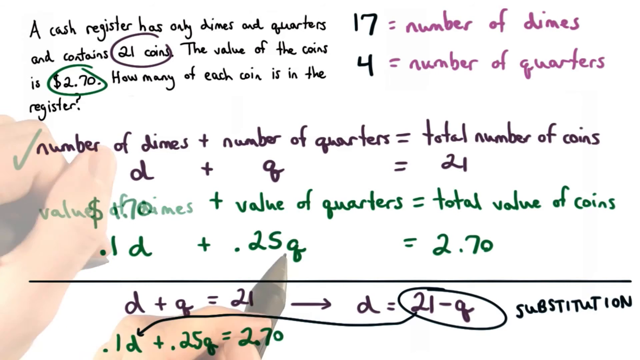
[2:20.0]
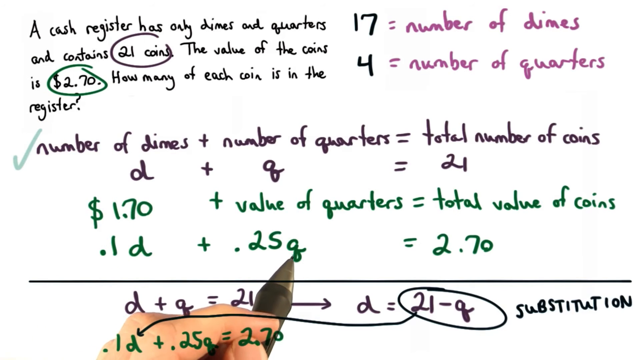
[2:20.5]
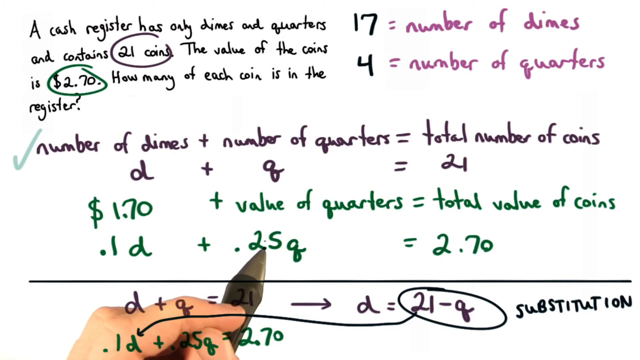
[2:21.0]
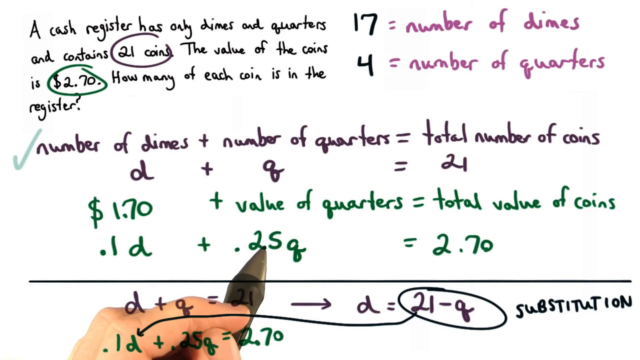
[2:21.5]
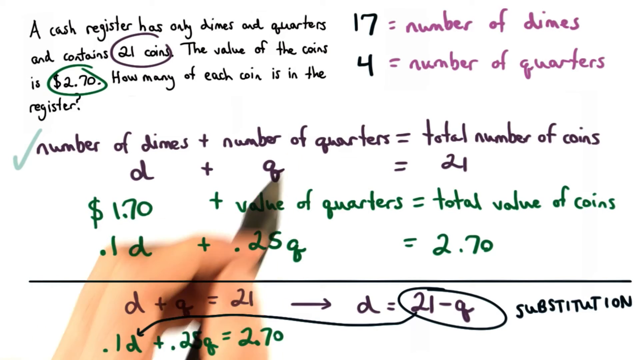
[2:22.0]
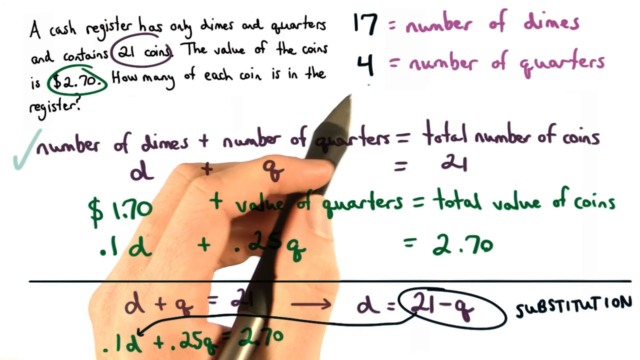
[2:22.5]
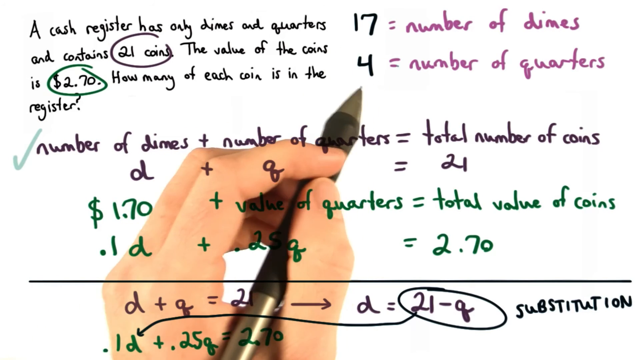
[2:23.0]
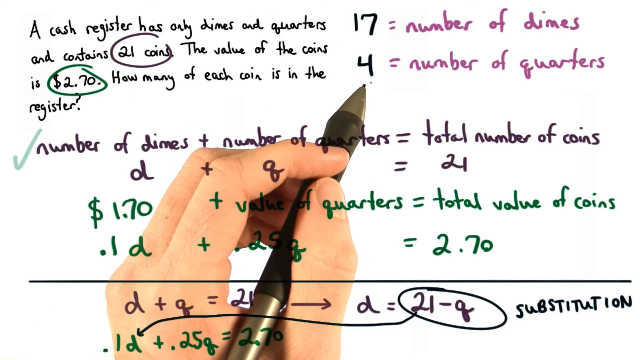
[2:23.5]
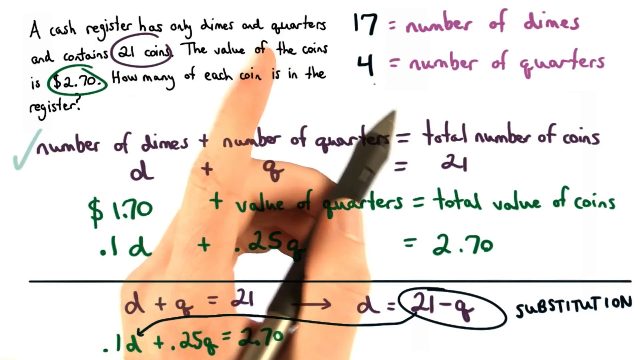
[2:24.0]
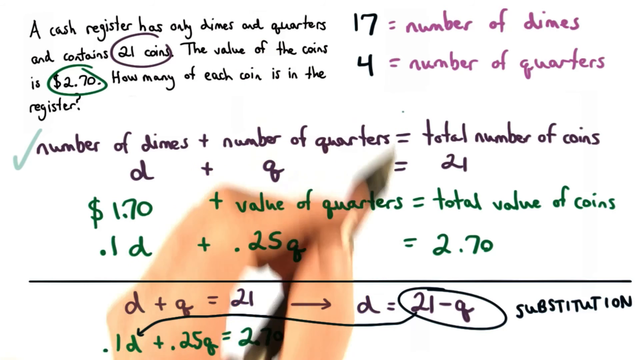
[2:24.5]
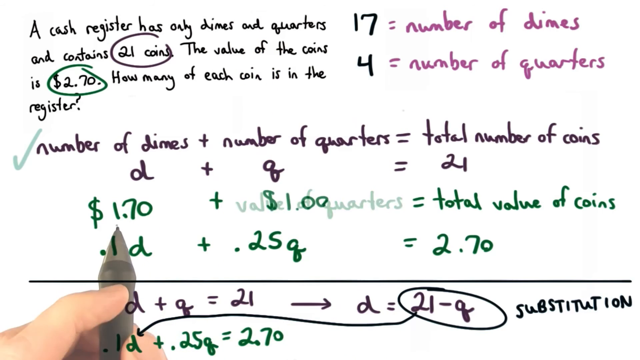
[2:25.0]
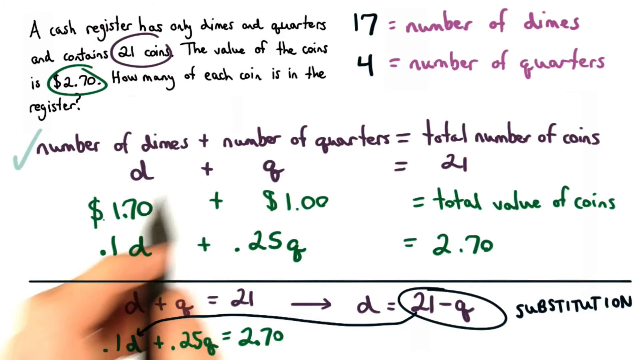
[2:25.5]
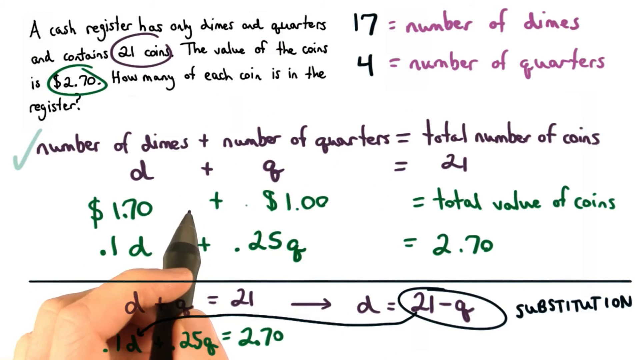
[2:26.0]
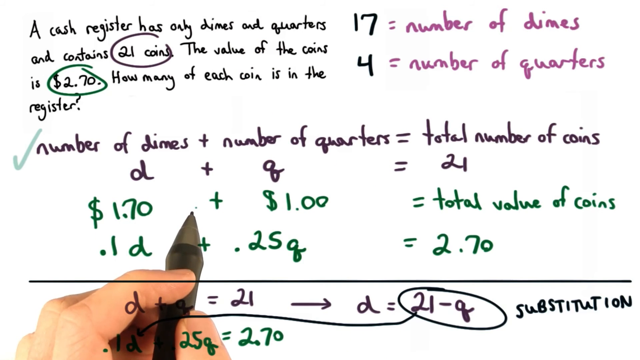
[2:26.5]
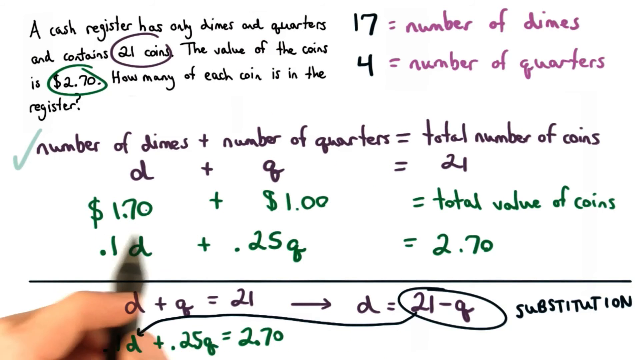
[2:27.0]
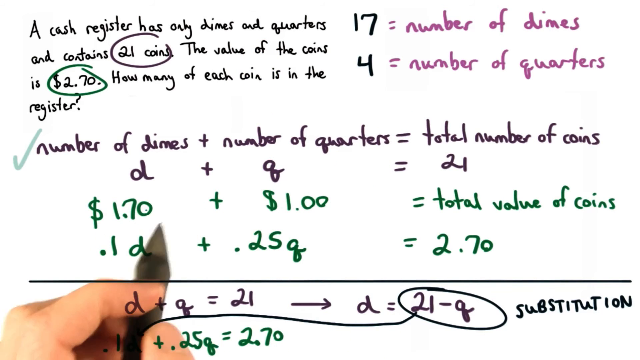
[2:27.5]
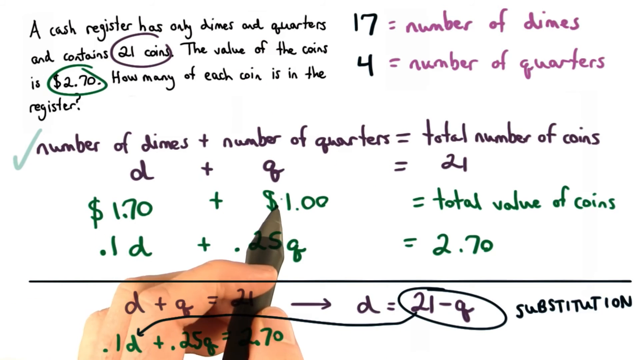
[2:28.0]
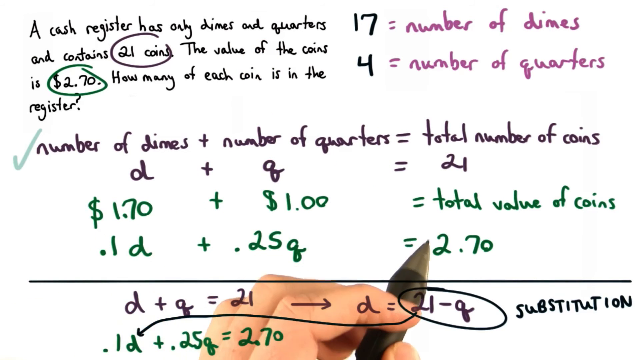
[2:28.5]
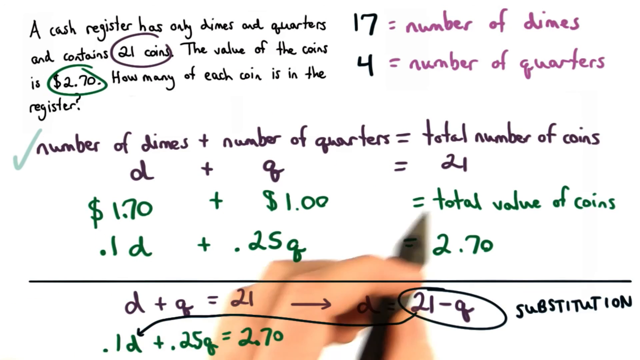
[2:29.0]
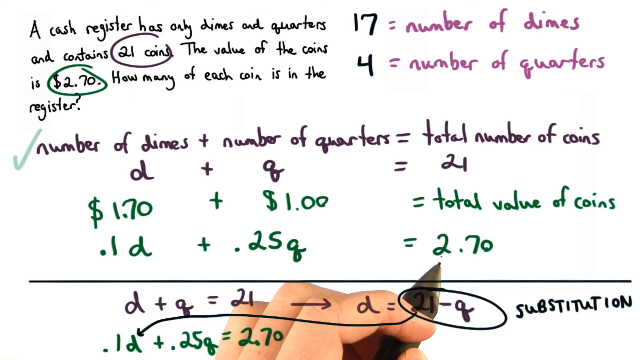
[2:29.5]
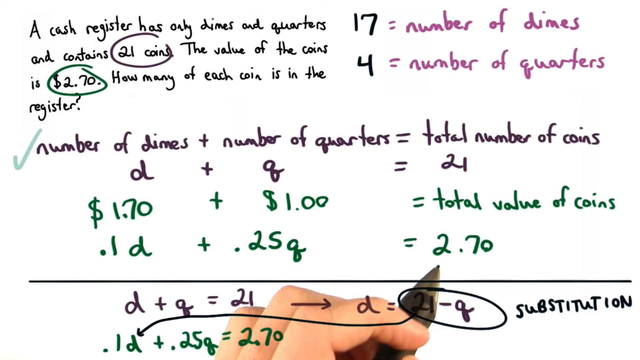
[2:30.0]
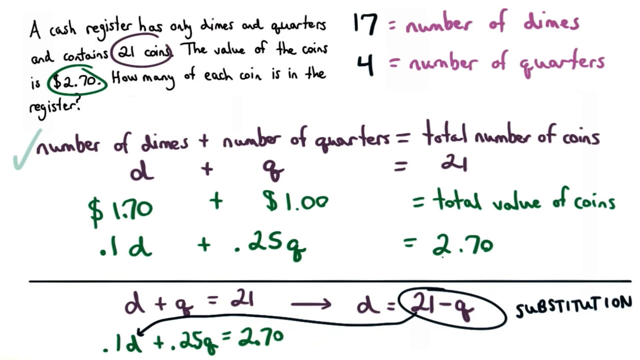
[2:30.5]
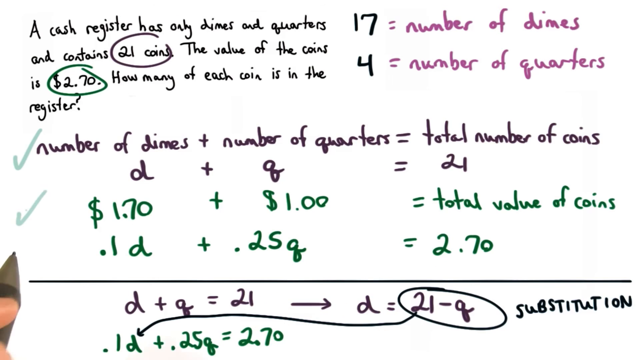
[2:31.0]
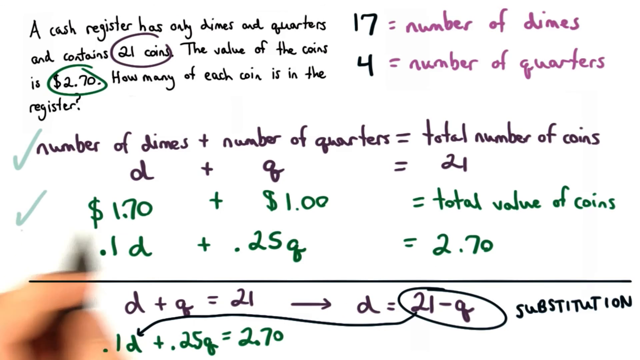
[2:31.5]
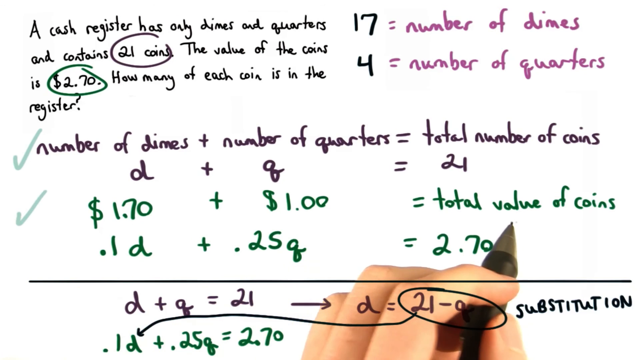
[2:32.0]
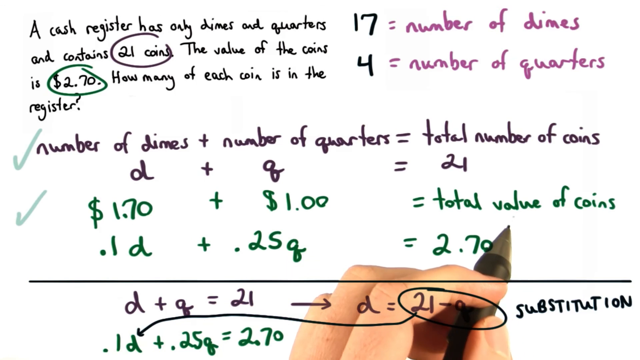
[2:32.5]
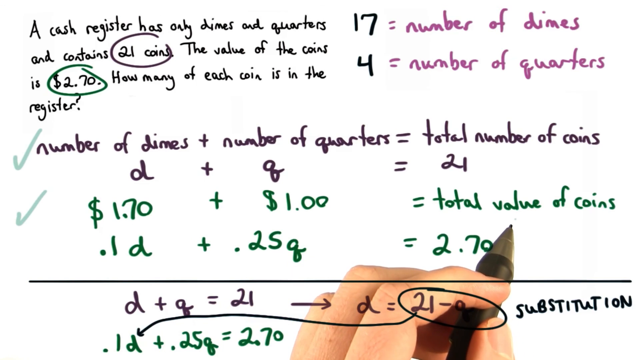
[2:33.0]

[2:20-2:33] The same screen is shown. In the upper left is "a cash register has only dimes and quarters and contains 21 coins. The value of the coins is $2.70. How many of each coin is in the register?" with "21 coins" circled in black and "2.70" circled in green. Beside it in the upper right quadrant are a black 17 and 4, with "= number of dimes" and "= number of quarters"; the 17 is set in purple. Beneath that is a faded green check mark, then in black "number of dimes + number of quarters = total number of coins" and "d + q = 21". Beneath that is a garbled line: the "value of dimes" part is garbled, while "+ value of quarters = total value of coins" is clear. Beneath that is "0.1d + 0.25q = $2.70", then a horizontal line. As the video plays, the garbled value of dimes changes to "$1.70", so the line reads "$1.70 + value of quarters = total value of coins". The pen, coming up from off screen, points at the 0.25q, then circles the 4 for number of quarters and circles the 1.70. The value of quarters is then replaced with "$1", and the pen moves back and forth, making a circular motion around the 2.70 and then "total value of coins".